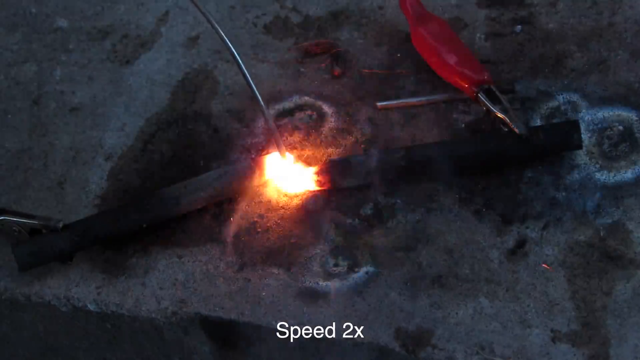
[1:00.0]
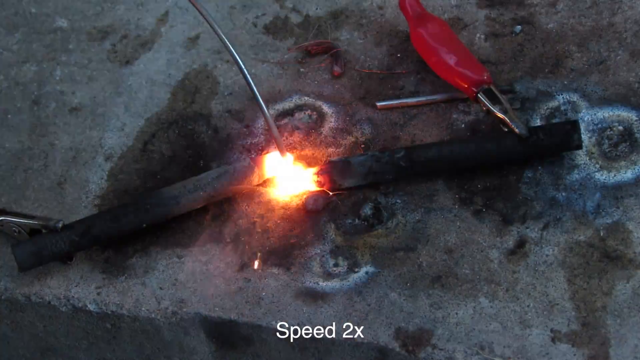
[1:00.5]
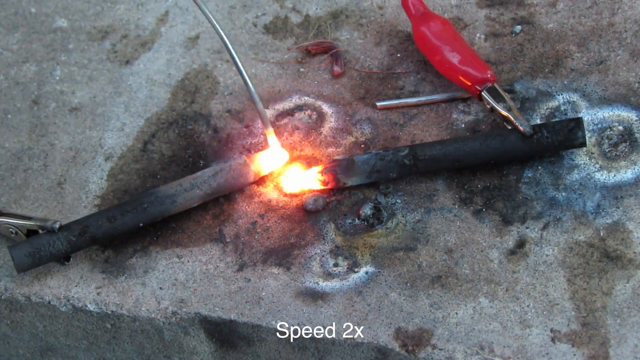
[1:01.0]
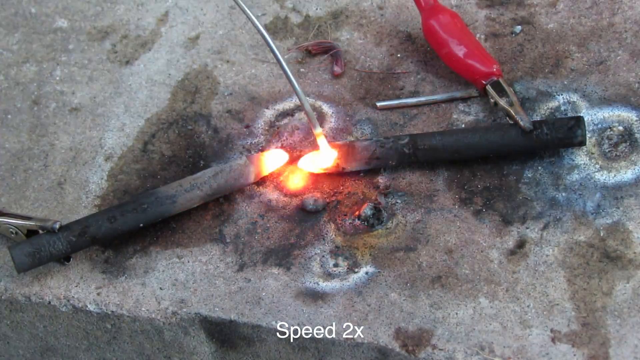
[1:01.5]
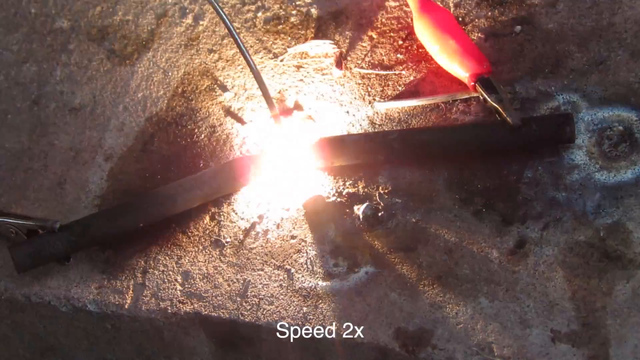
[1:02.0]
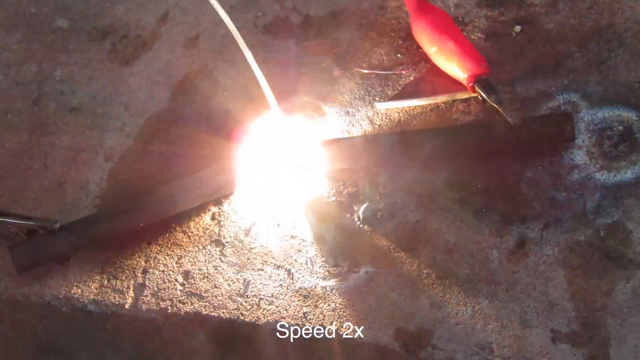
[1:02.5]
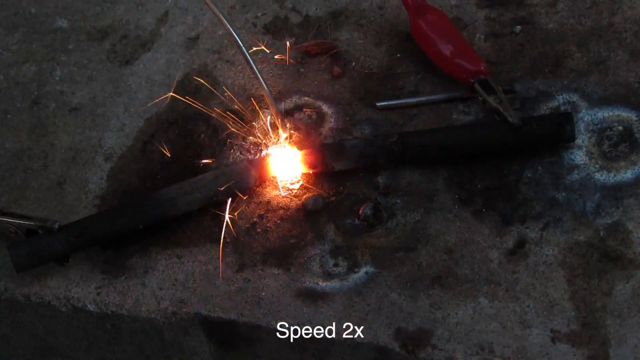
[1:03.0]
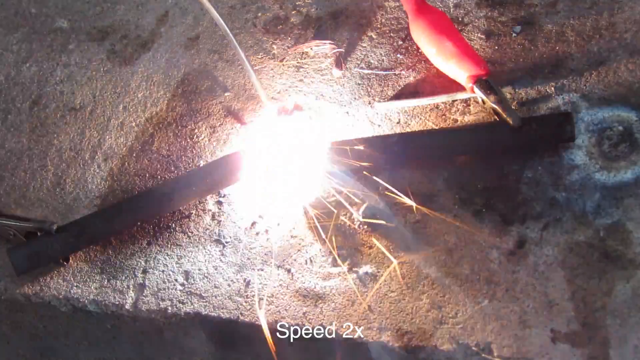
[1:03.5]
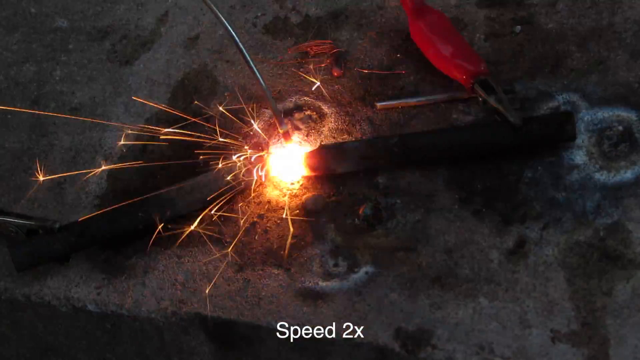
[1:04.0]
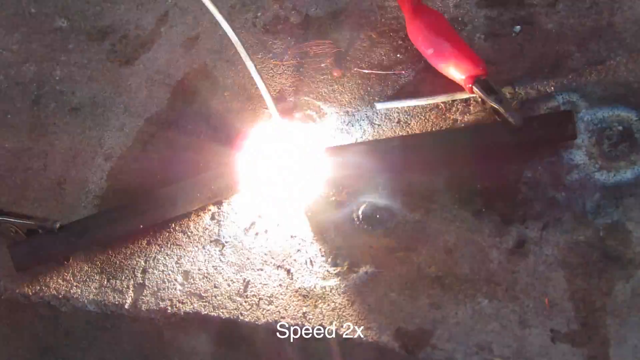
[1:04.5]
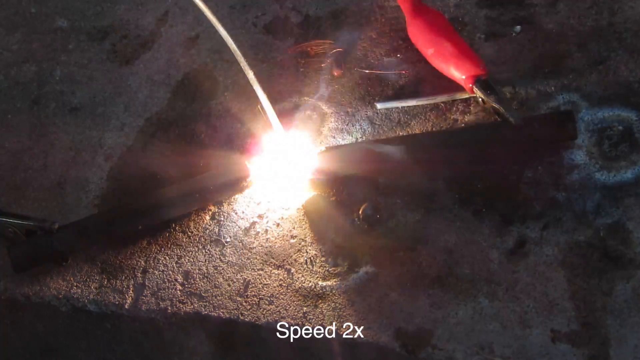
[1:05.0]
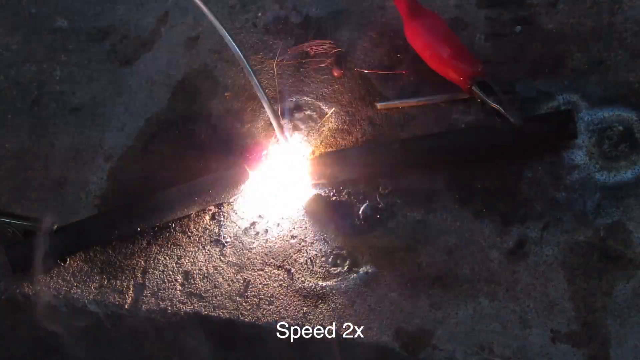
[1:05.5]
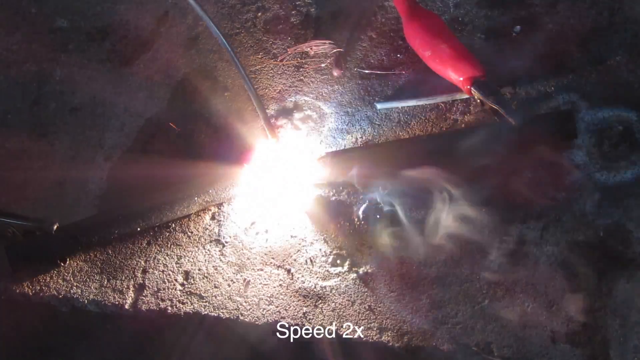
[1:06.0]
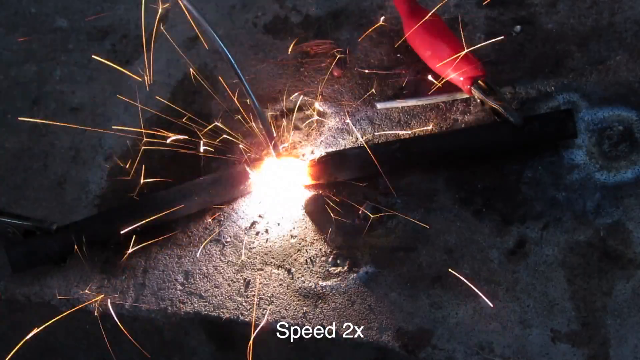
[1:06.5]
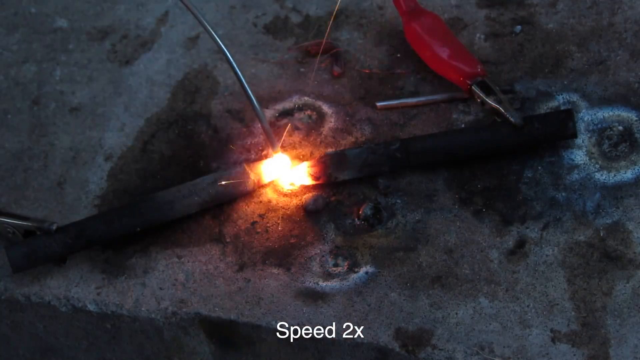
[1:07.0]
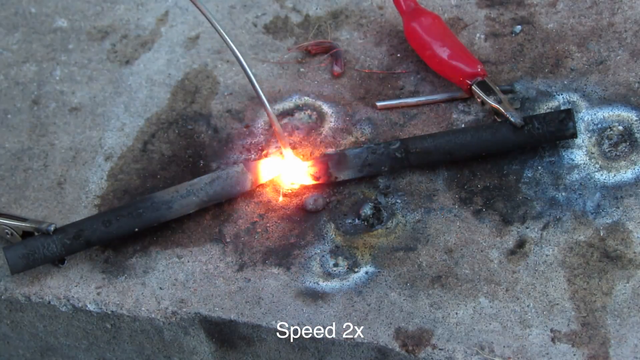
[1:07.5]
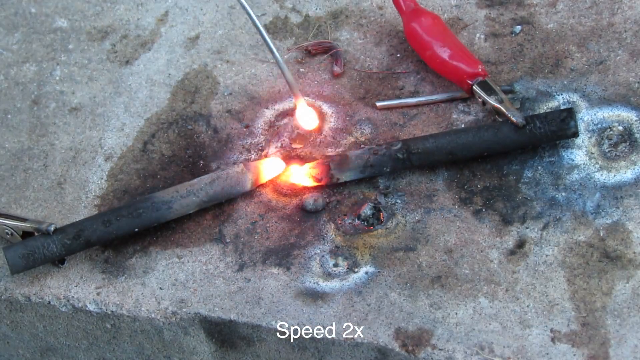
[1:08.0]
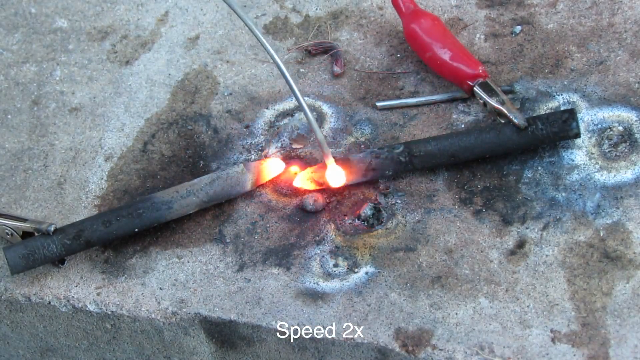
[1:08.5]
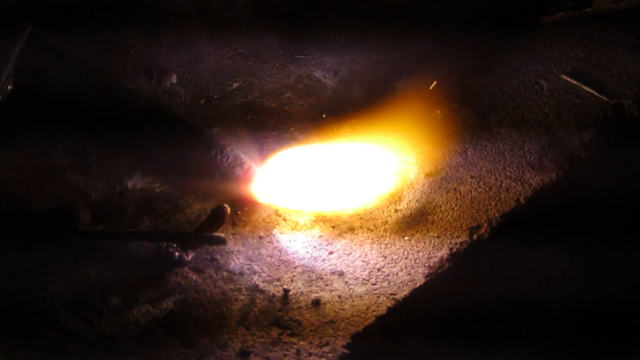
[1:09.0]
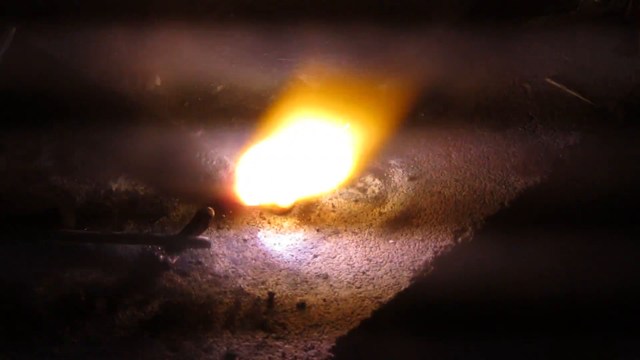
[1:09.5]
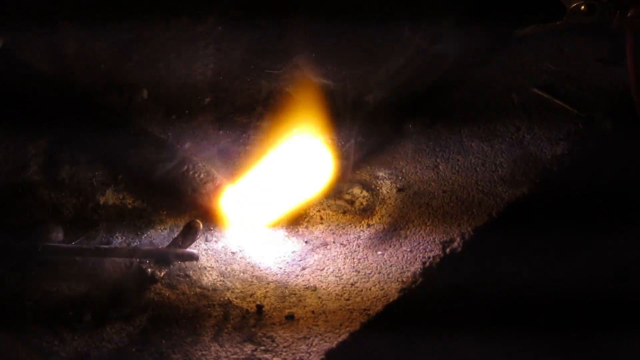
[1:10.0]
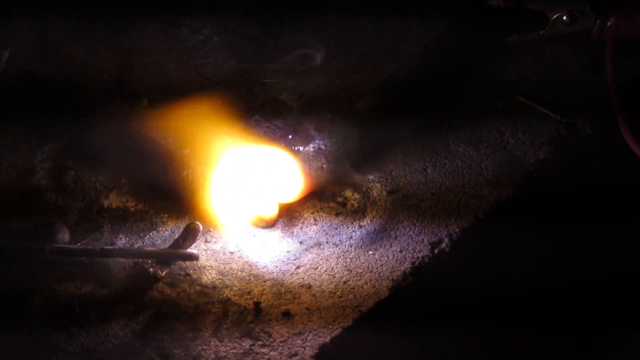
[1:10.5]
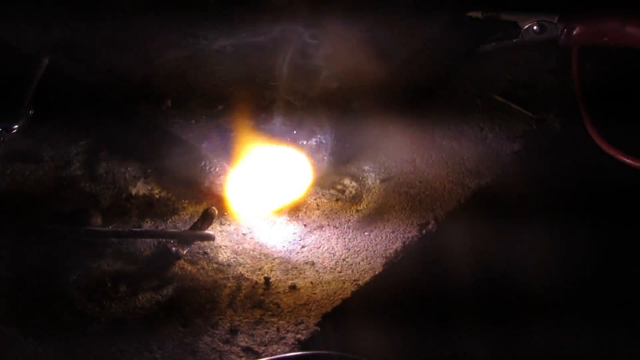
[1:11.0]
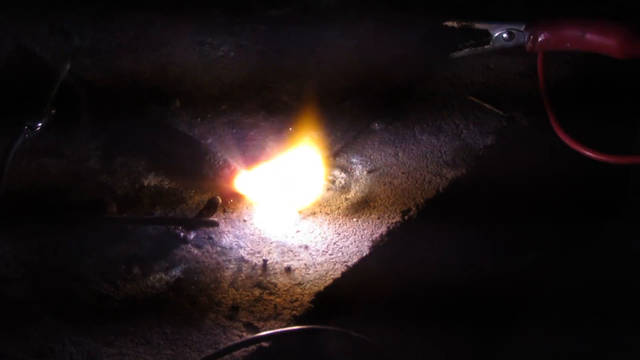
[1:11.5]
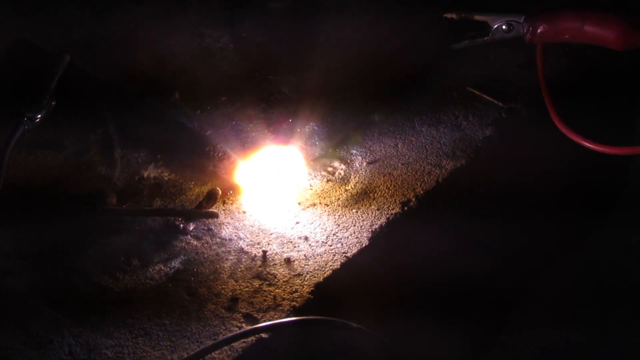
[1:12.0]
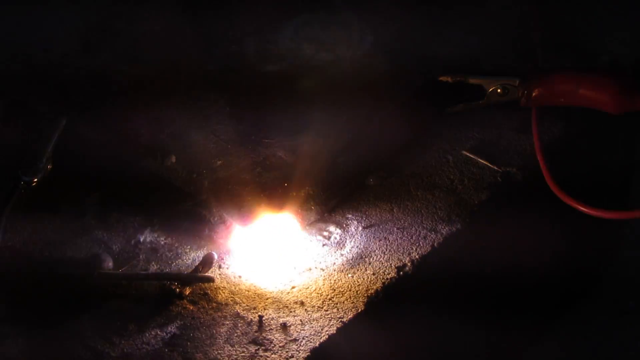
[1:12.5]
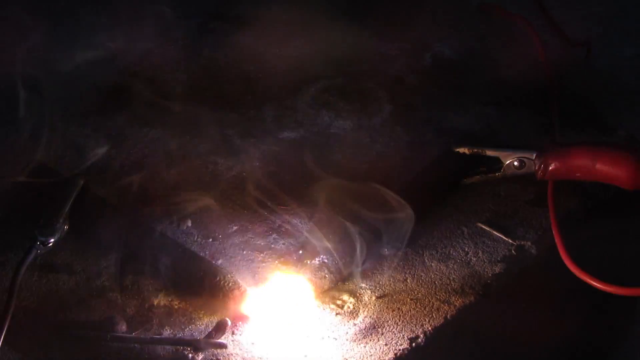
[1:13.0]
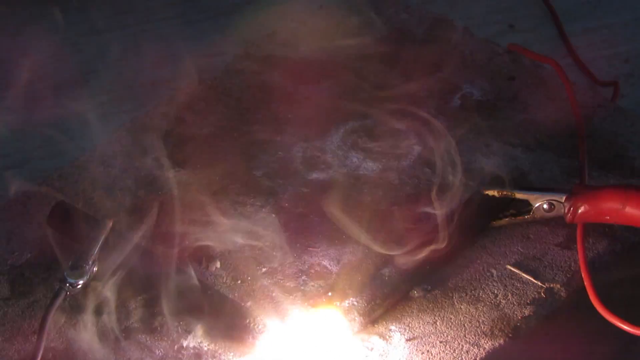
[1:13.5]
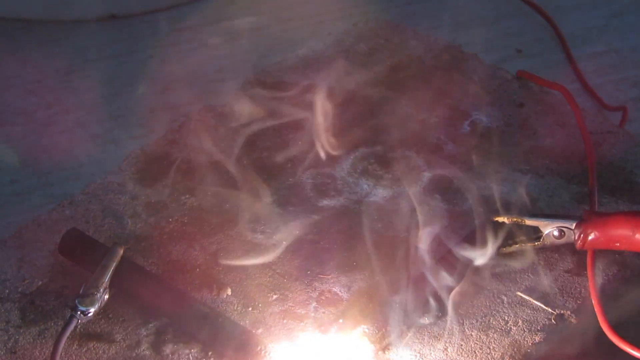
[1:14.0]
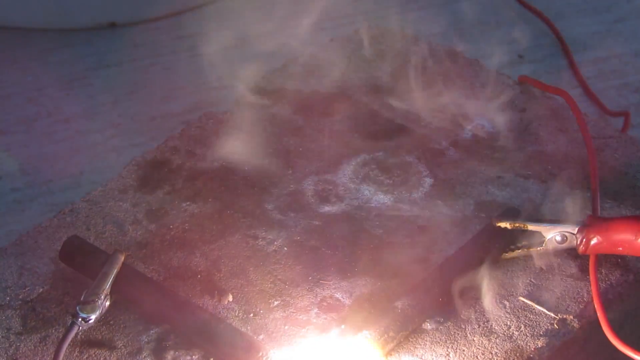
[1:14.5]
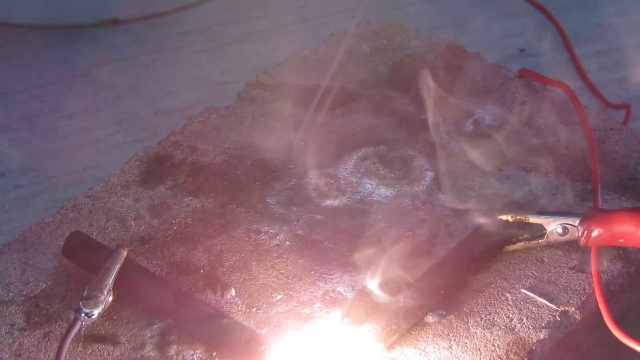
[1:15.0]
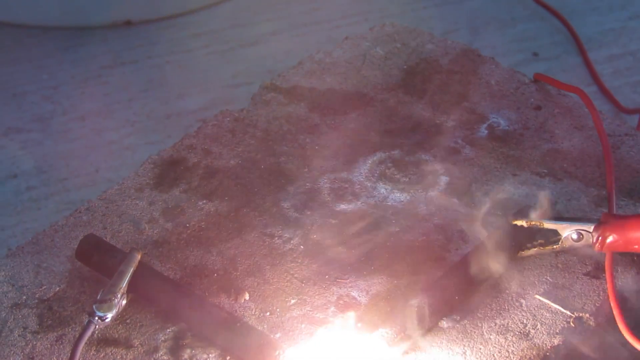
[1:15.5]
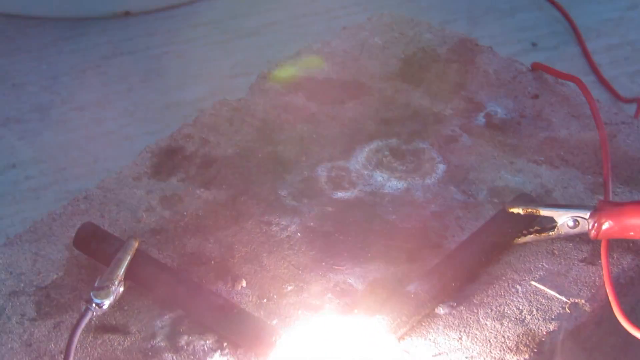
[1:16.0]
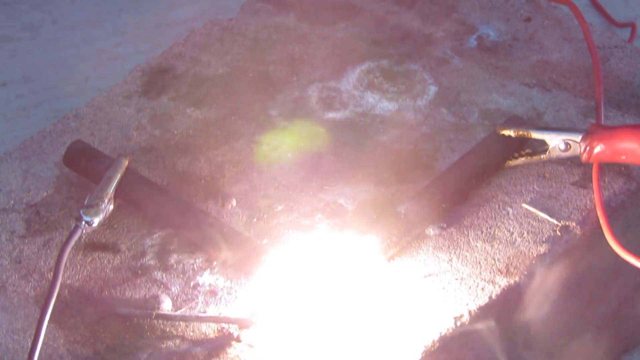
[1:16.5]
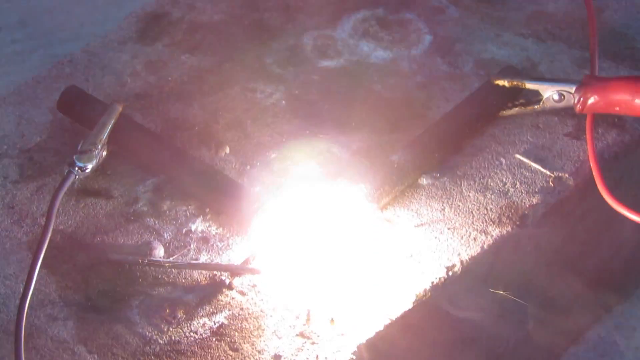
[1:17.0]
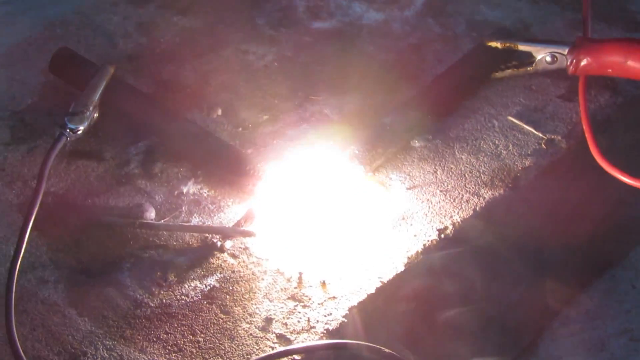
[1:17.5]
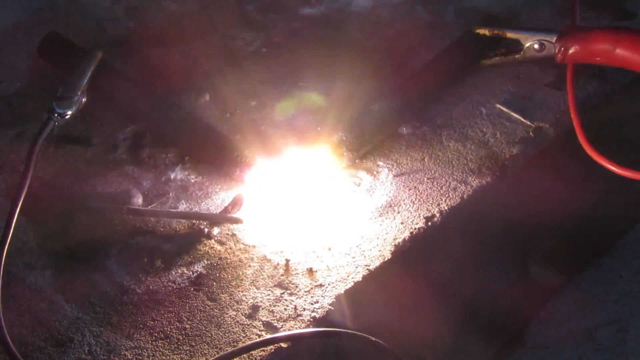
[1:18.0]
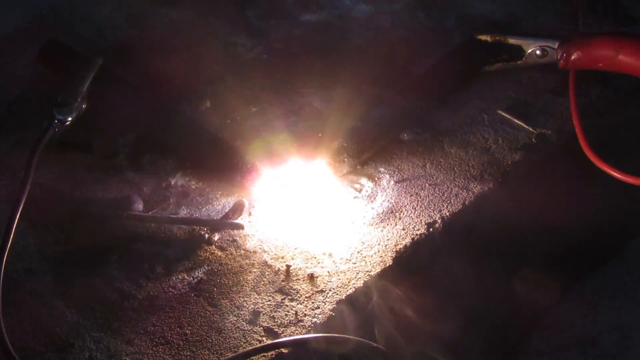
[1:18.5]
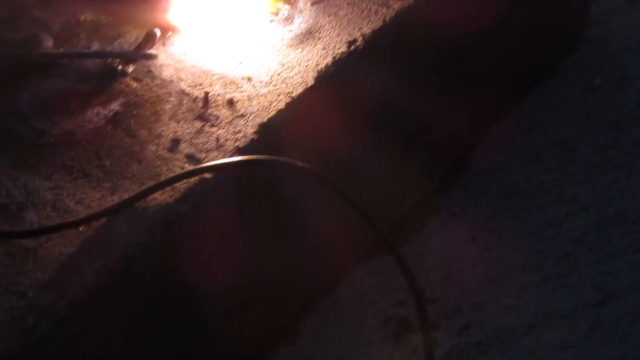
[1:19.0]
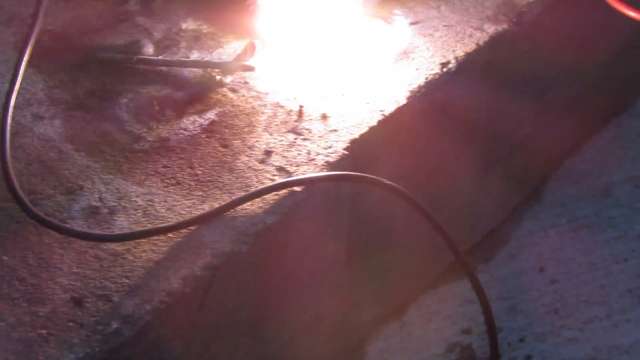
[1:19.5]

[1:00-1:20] A dark shot shows the two black cylinders creating light between them, with the silver pole helping to create it, and sparks come off the light. The scene then becomes brighter, still showing the tools on the brick in a close-up of the two black cylinders with the flame going. The silver pole is at the left cylinder, then switches to the right one. The light goes off again between them, more sparks come up at a more frequent rate, some smoke comes out, and eventually the light stops. The two cylinders and the pole all have yellowish lights where they touch each other. The light in the middle sort of stops a bit, but the pole switches to the left cylinder again. The camera switches to a darker shot of the brick, more to the left, where there is now a bigger light, a big flame. The camera zooms out to show a lot of smoke, and the shot turns brighter again, still showing the brick with smoke coming from it. The camera sort of goes back down a bit on the brick, showing the two cylinders with objects connected to both: a silverish clip on the left one and a red clip on the right one. The camera sort of zooms in on the flame, and the scene becomes darker again.